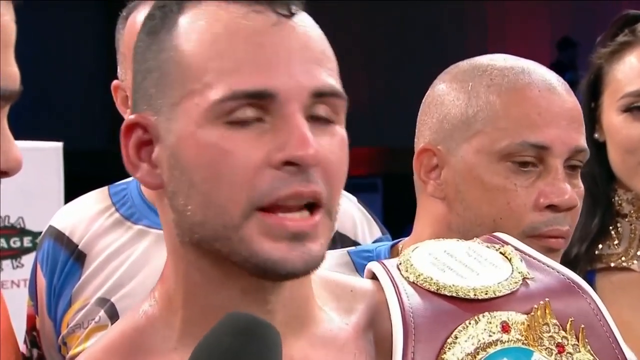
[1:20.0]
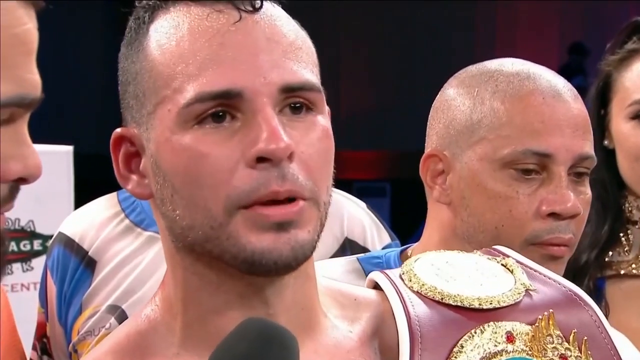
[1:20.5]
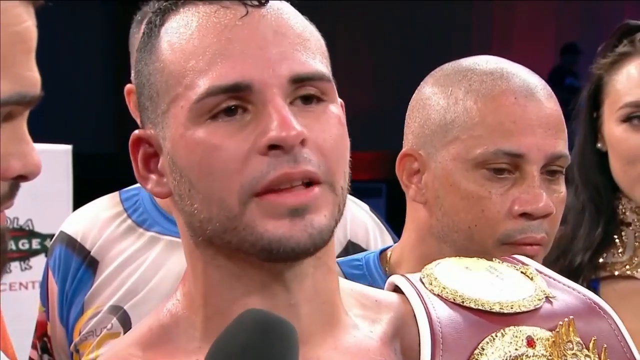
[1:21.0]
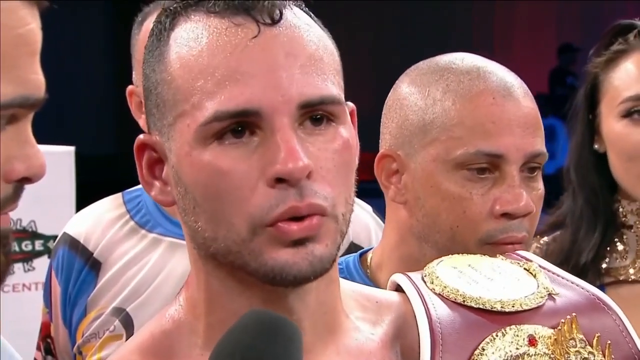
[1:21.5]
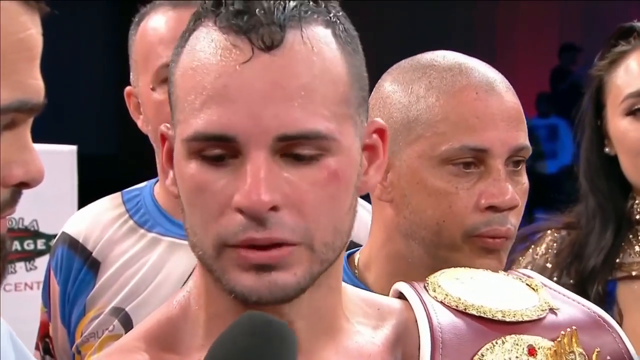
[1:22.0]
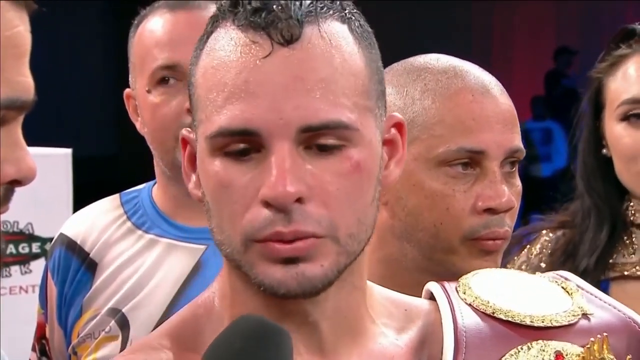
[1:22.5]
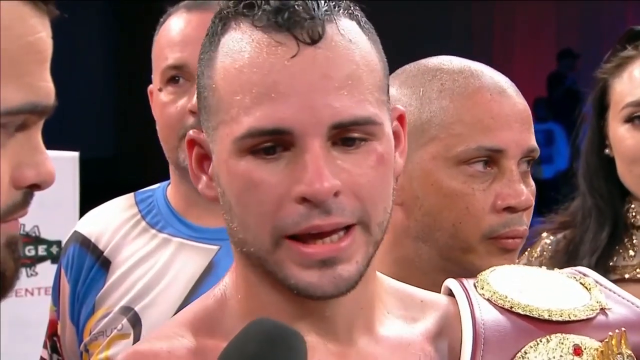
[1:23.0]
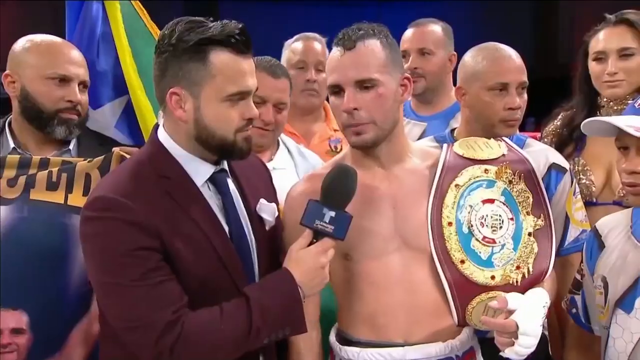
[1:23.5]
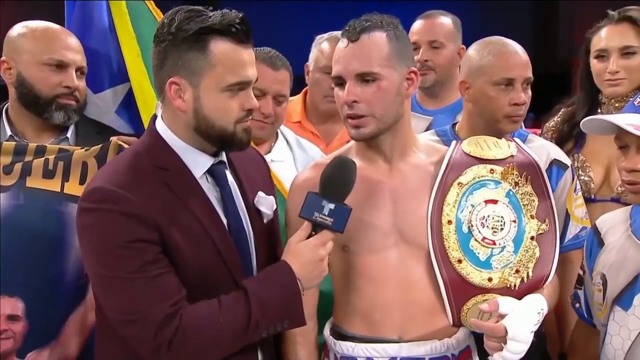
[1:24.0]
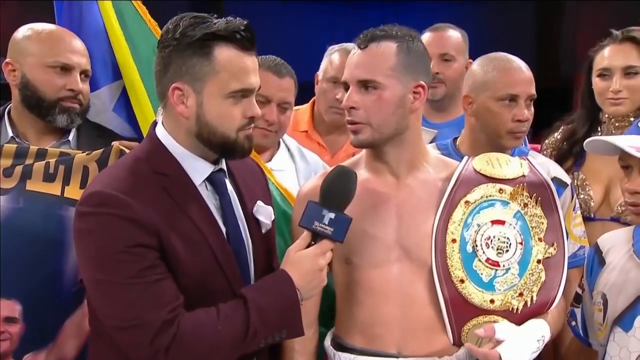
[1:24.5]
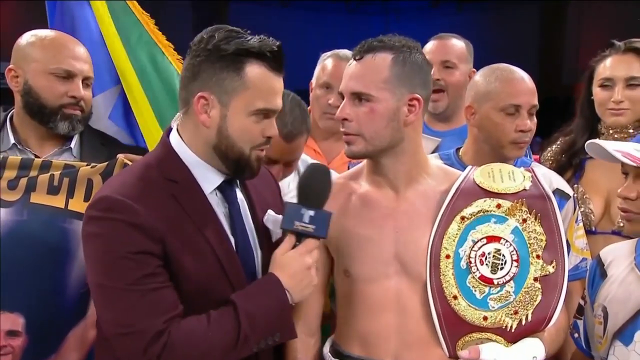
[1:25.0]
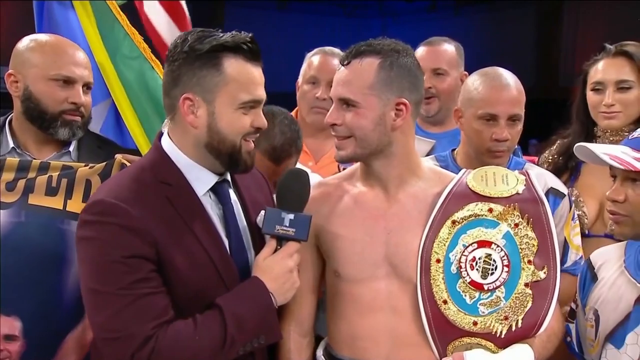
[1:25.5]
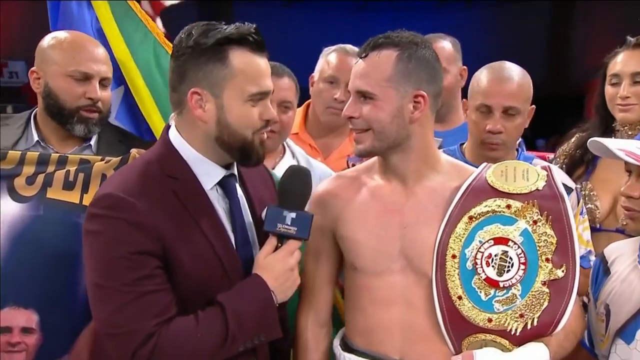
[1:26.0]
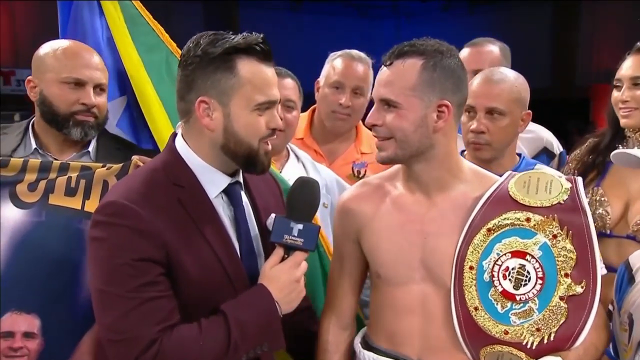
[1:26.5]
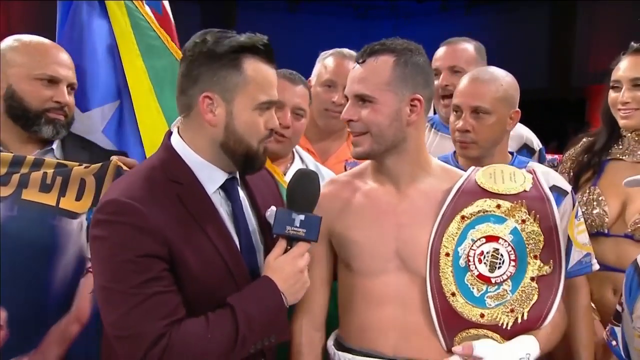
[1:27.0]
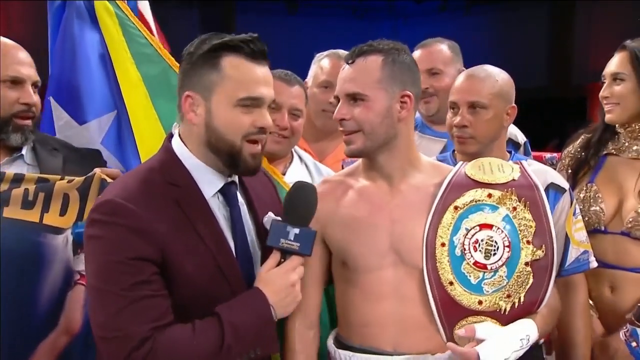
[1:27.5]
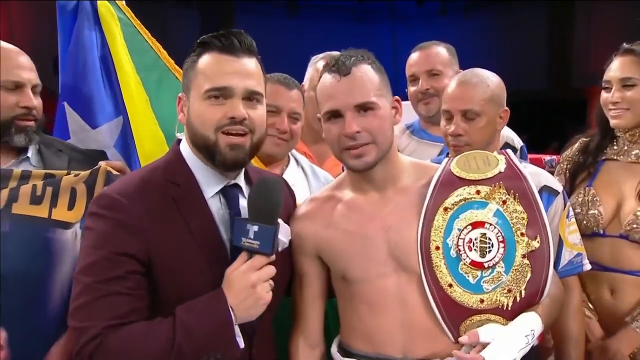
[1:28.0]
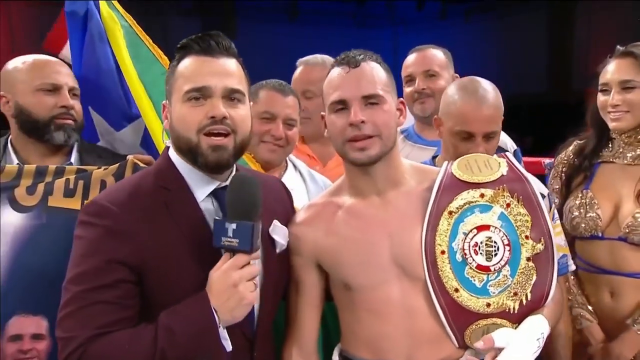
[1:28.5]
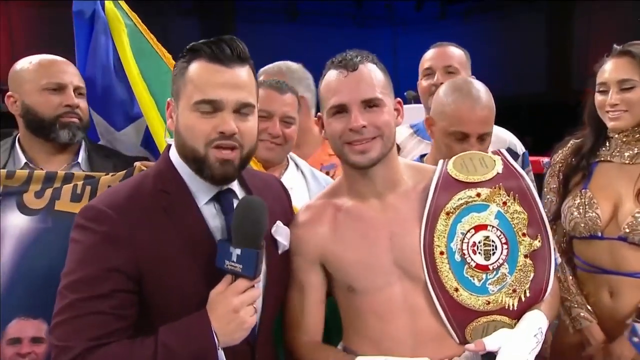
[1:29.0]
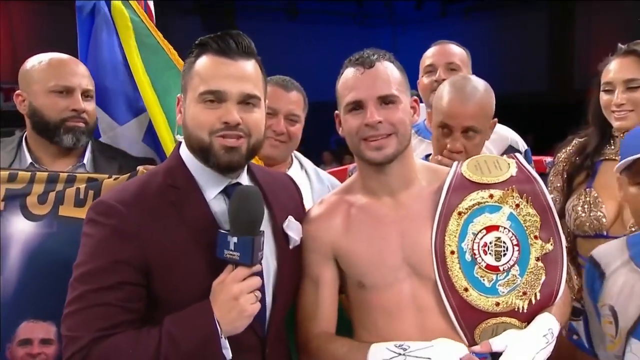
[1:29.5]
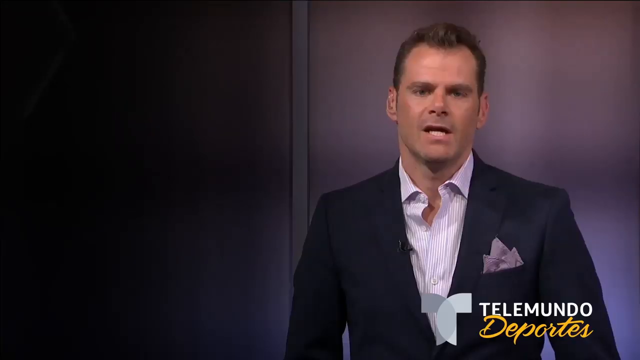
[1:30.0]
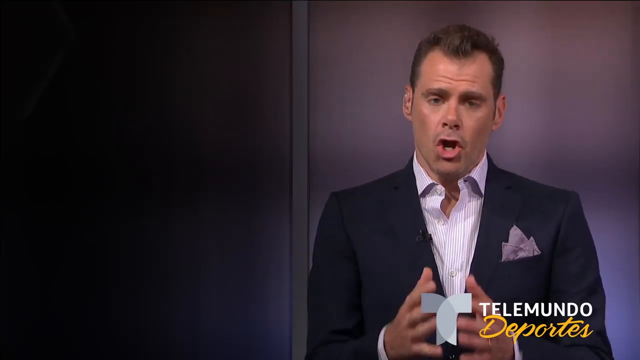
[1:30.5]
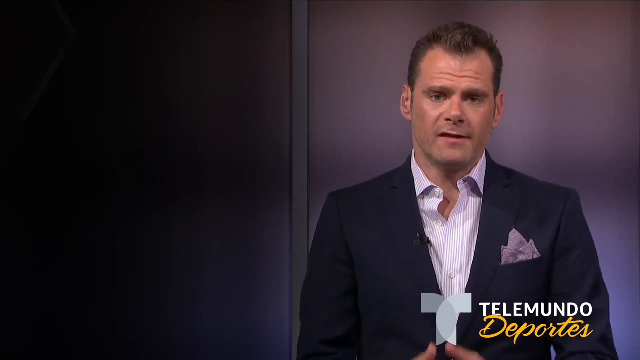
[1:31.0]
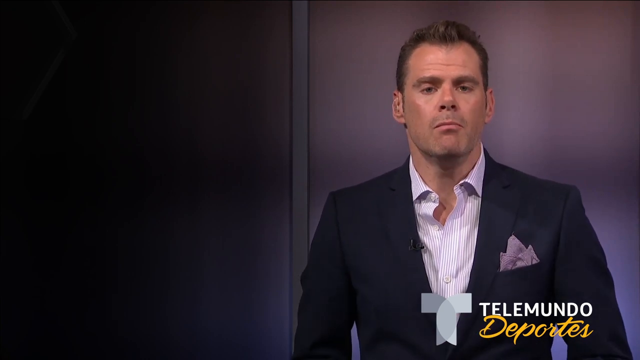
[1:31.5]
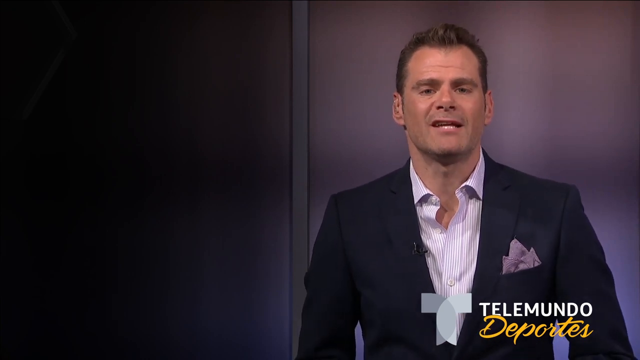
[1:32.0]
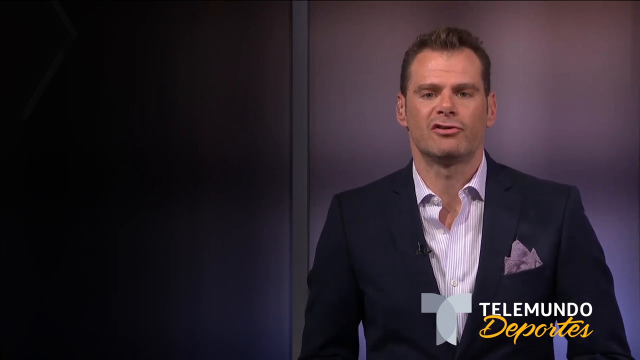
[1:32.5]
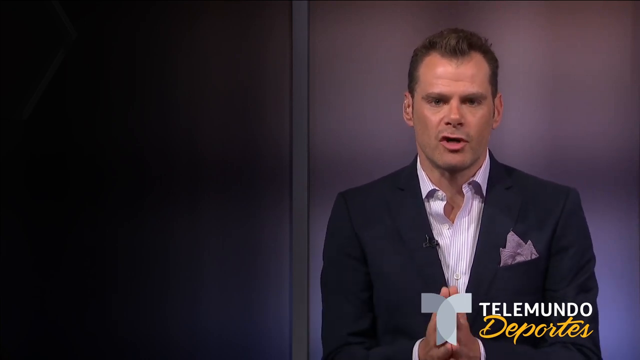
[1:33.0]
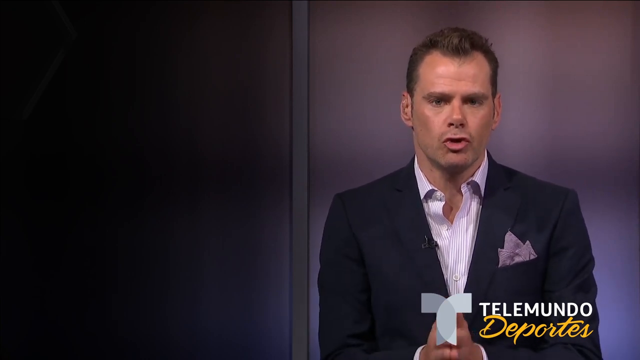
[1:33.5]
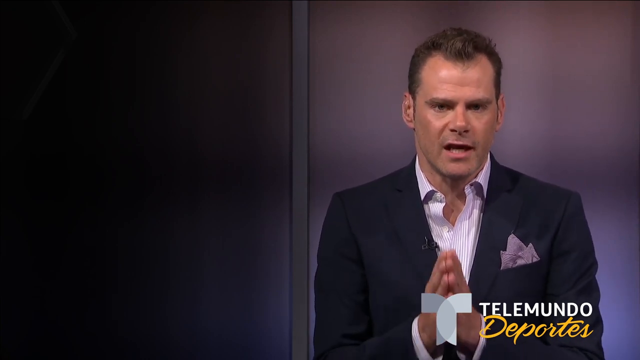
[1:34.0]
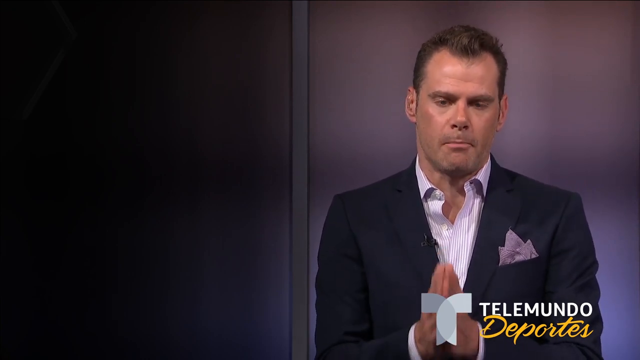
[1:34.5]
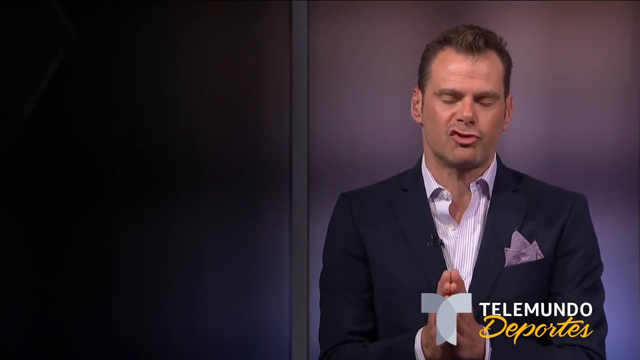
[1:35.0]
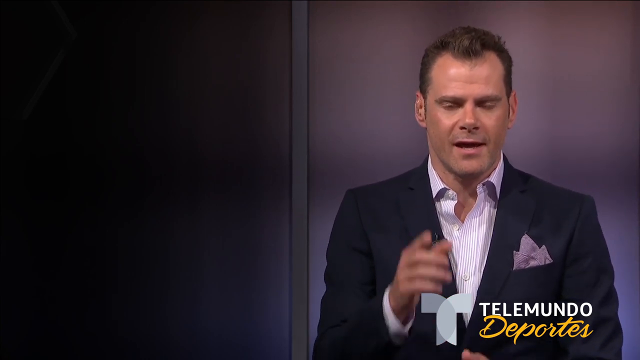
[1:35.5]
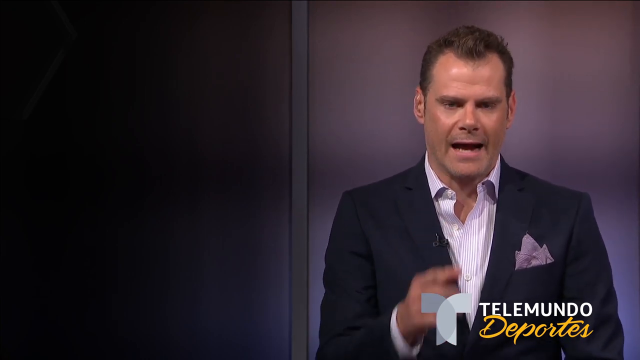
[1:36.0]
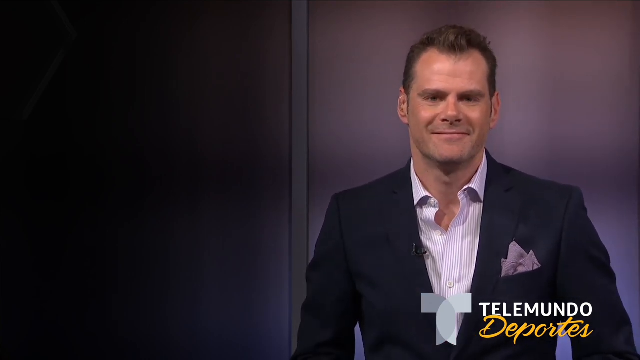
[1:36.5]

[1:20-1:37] Just the forehead, eyebrow and nose of the interviewer peek out on the far left of the screen. Much of the top of the screen has quite a dark background with some sort of advertising content. Sticking out at about the level of halfway up the interviewer's nose is a white horizontal line that comes down at a right angle to point towards the bottom of the screen, with some sort of logo in red, white and black on it. An individual in a blue and white top sticks out on the right-hand side of the boxer; part of his head is visible behind the boxer on the right from the ear upwards: the side of his head, a bit of his forehead and his hair. The boxer is left of center this time, with a microphone popping up at the bottom of the screen. He still wears the belt over his left shoulder, and above that is the shaven-headed man in the blue and white top. The young woman is again on the far right of the screen. The view then moves to a more panoramic shot of the whole stage with similar individuals as seen before. Then a separate screen appears, split into two: on the left there is just a dark background, then some sort of barrier or break in the wall behind, then a lighter background. In front of that is a young man in a dark jacket with a gray handkerchief coming out of the pocket on his left chest, and a white shirt open at the neck with a light gray stripe. In the right corner is a Telemundo Deportes logo.